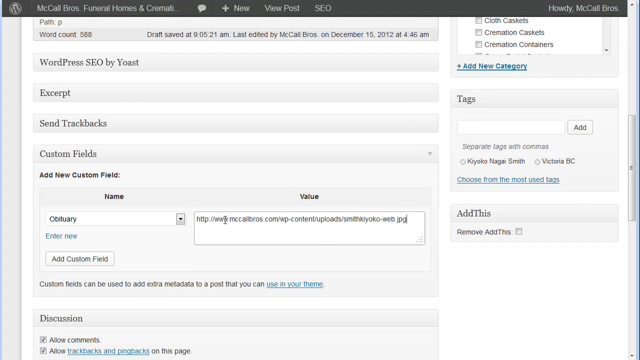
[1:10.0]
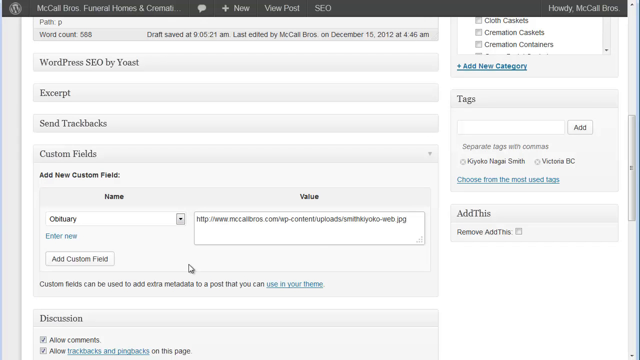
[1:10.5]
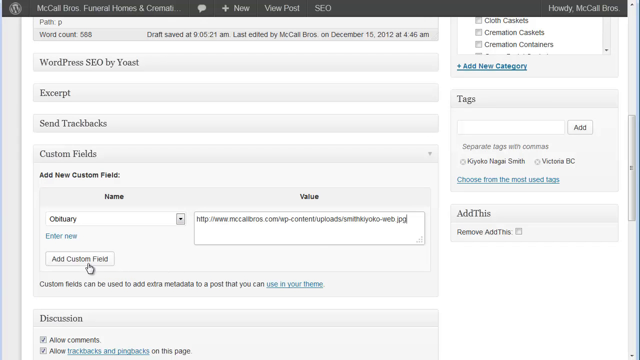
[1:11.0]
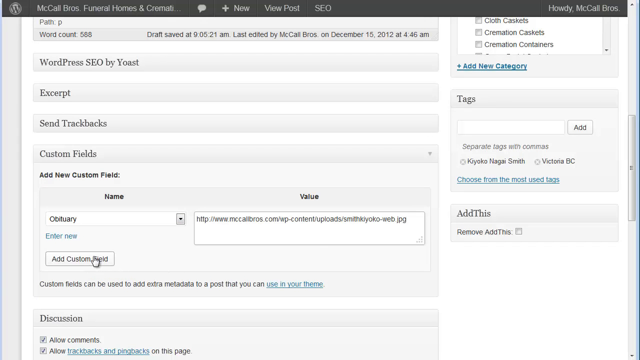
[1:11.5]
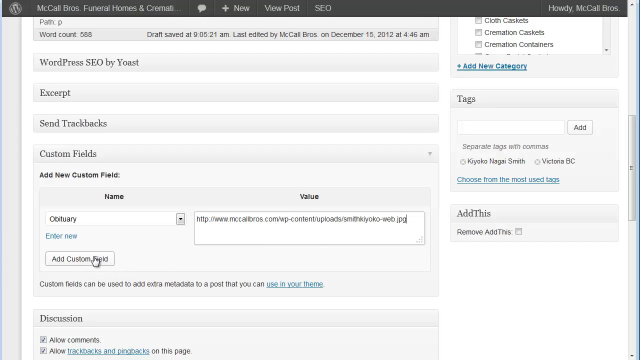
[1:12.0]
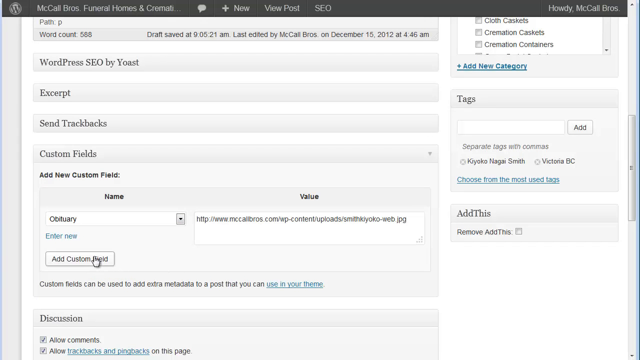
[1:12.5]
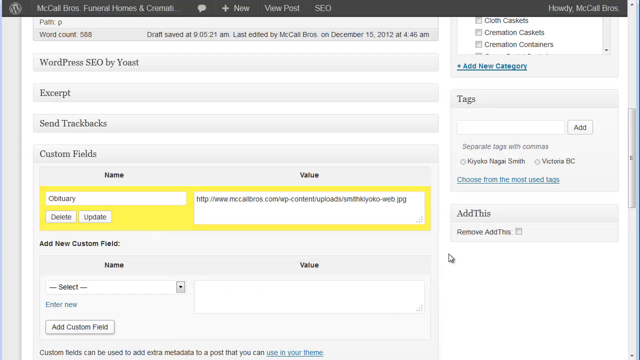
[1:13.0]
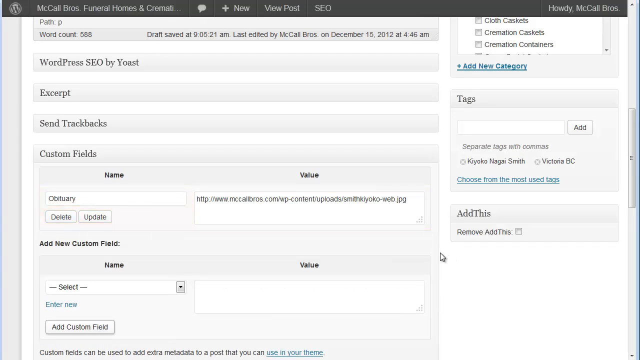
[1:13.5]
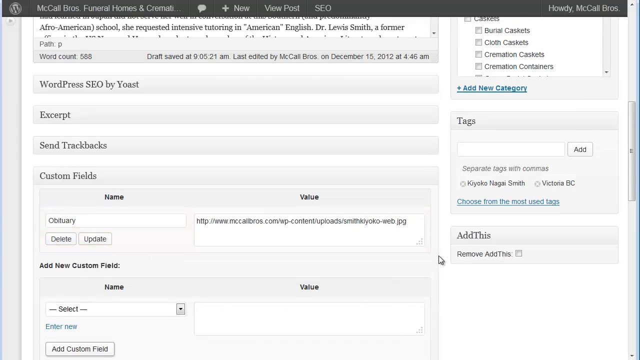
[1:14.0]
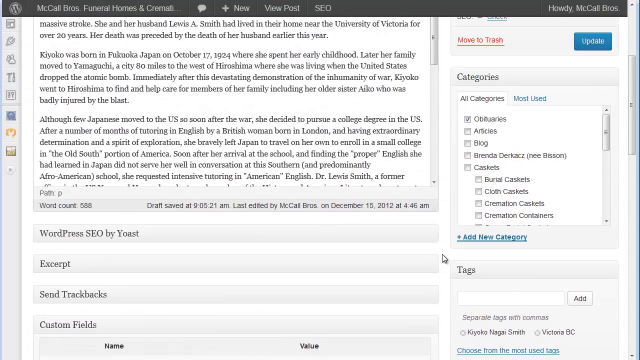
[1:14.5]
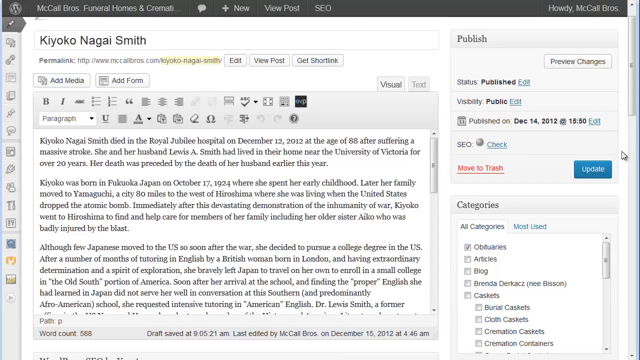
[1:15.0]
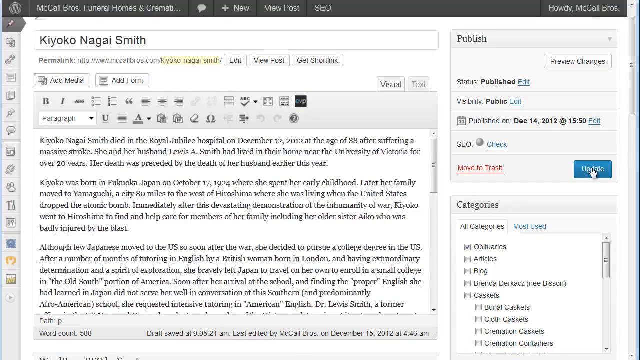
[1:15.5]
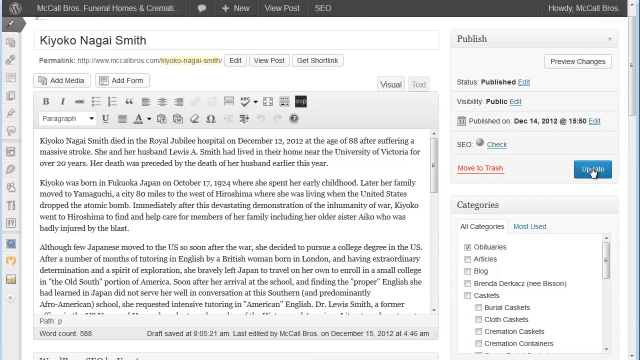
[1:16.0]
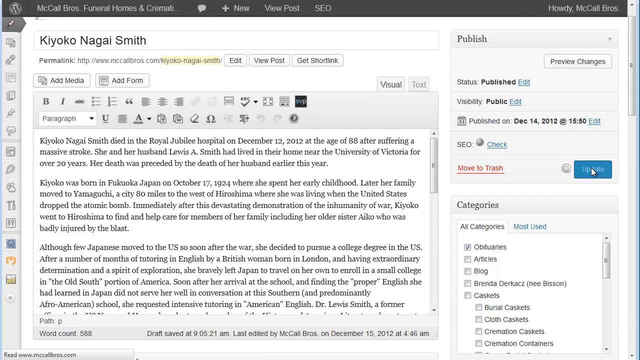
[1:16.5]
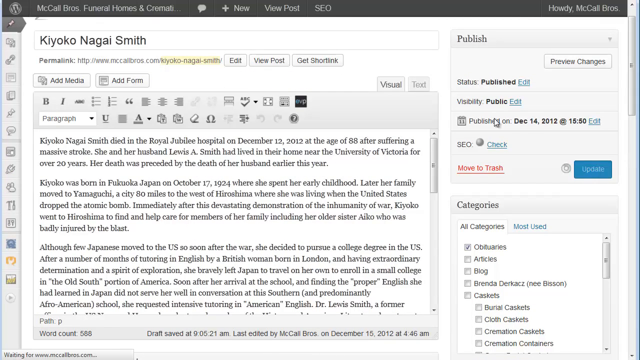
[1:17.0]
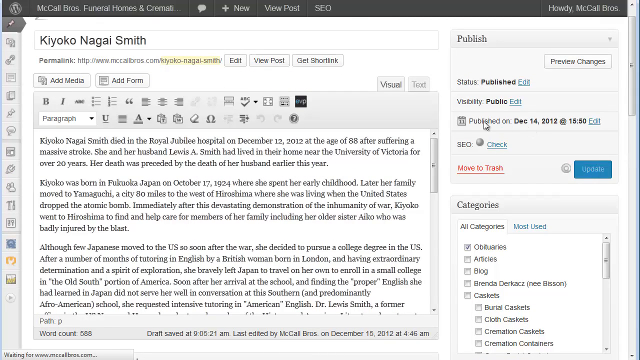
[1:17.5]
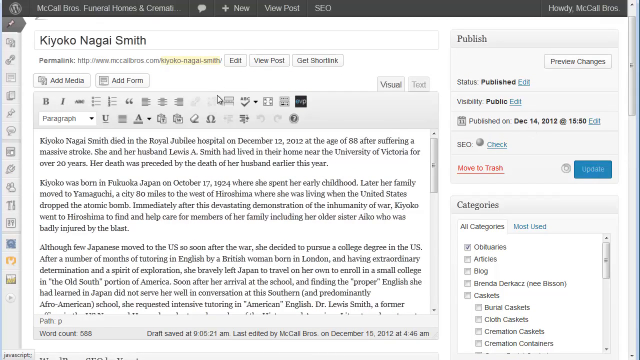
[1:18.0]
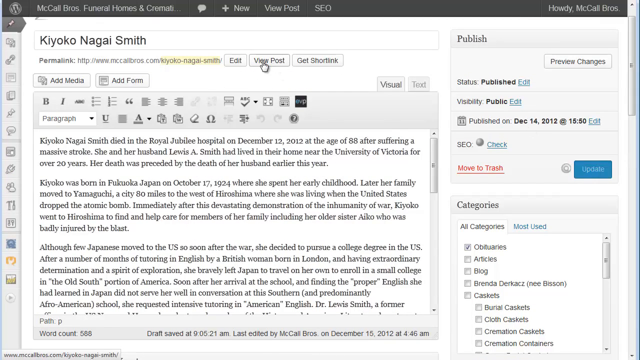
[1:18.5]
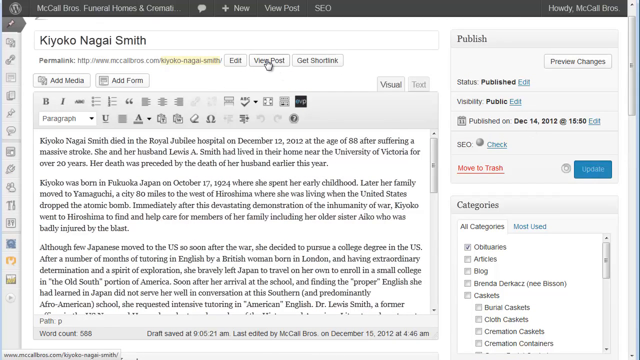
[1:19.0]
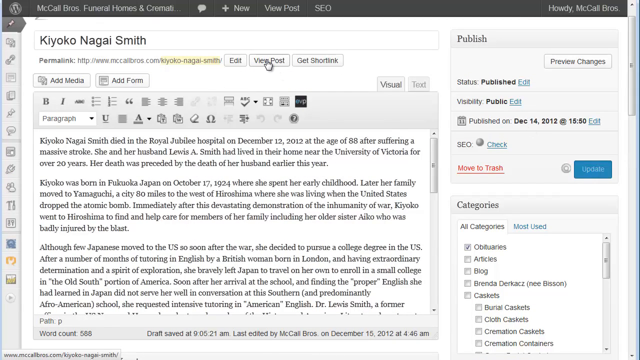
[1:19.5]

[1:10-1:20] The website is used to add, edit and customize images for an obituary through a customize field, where an image is selected, customized and saved.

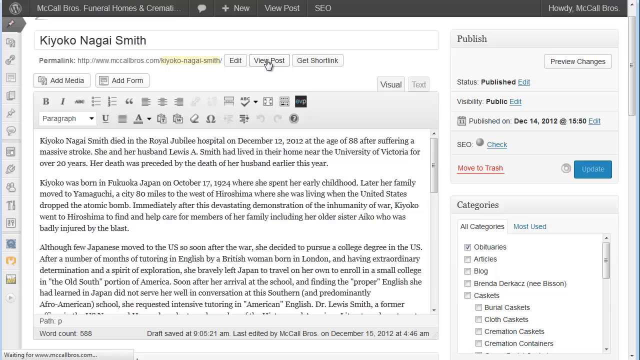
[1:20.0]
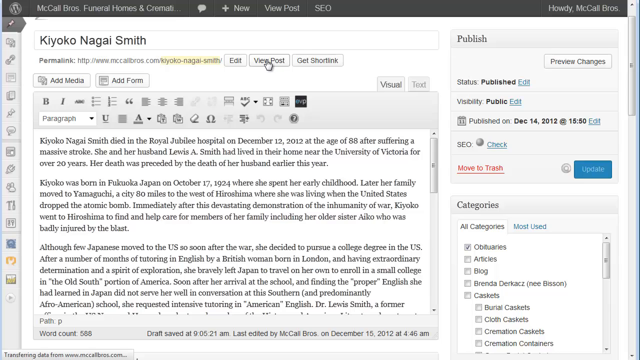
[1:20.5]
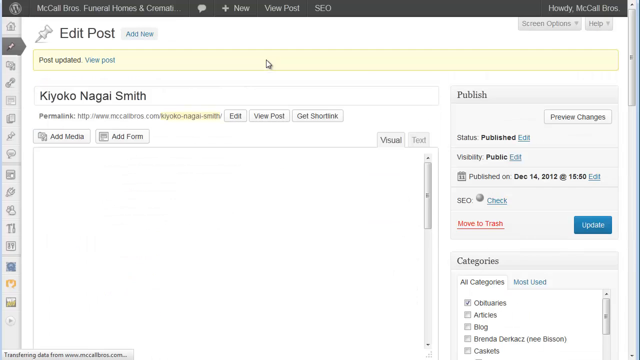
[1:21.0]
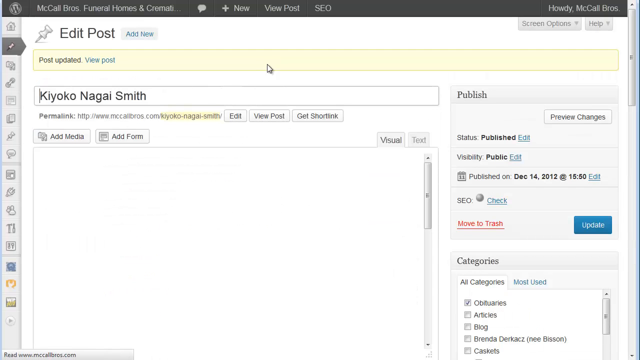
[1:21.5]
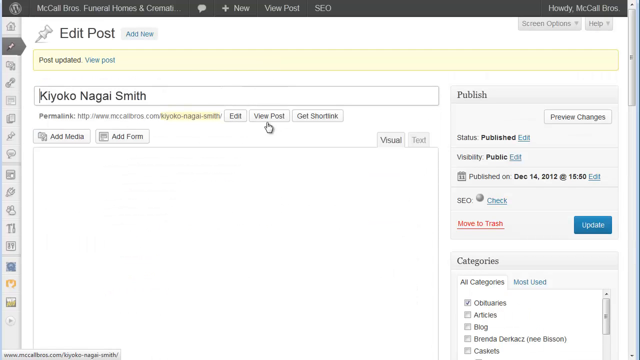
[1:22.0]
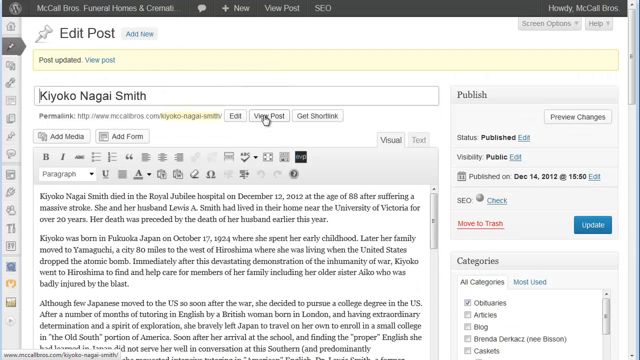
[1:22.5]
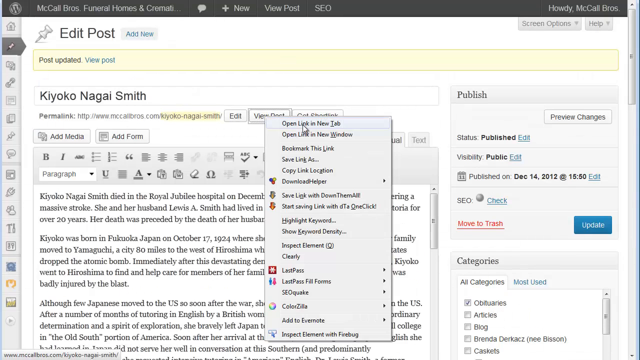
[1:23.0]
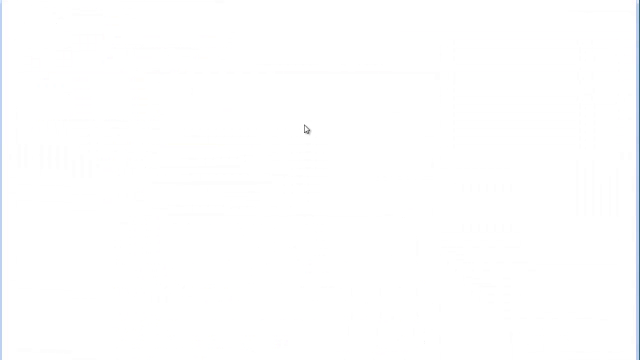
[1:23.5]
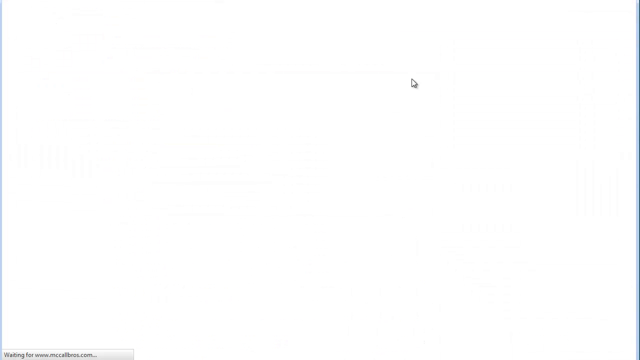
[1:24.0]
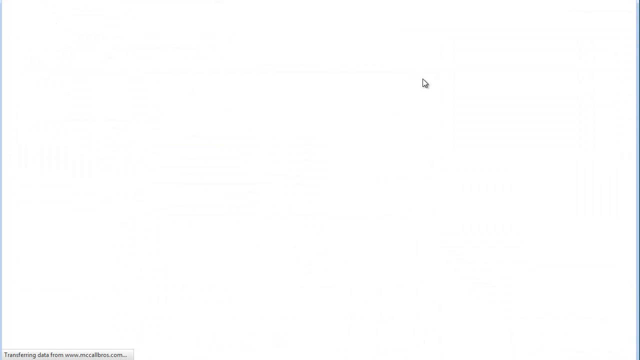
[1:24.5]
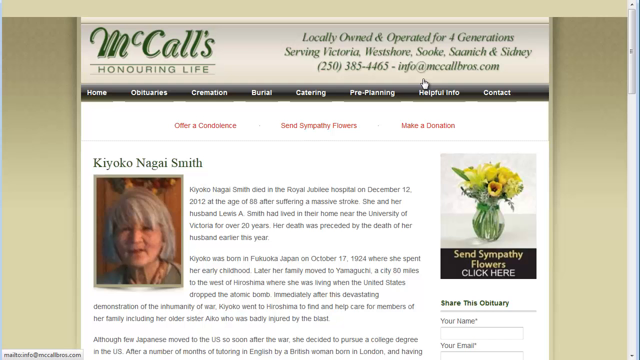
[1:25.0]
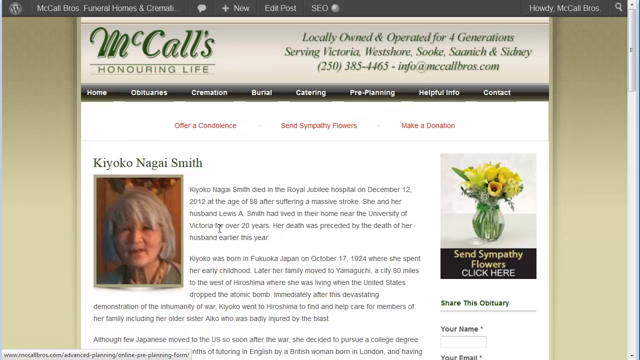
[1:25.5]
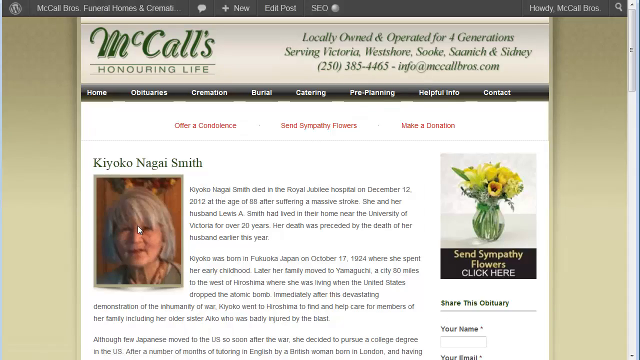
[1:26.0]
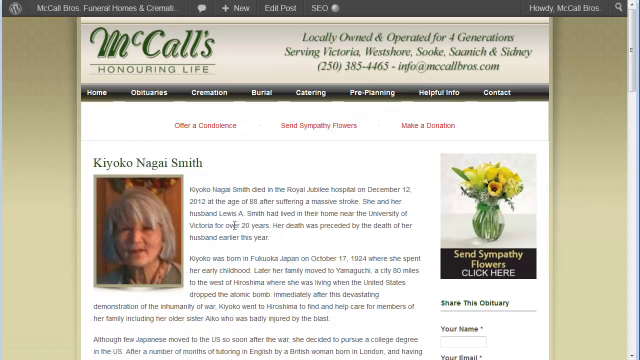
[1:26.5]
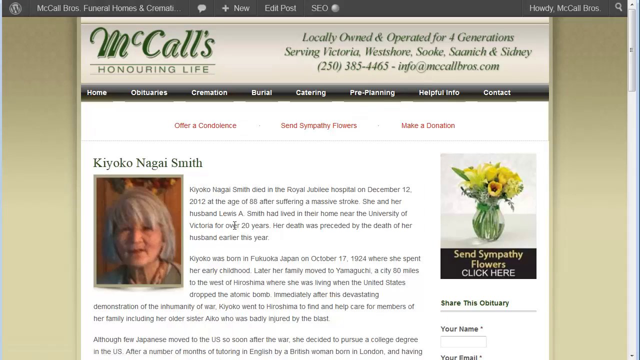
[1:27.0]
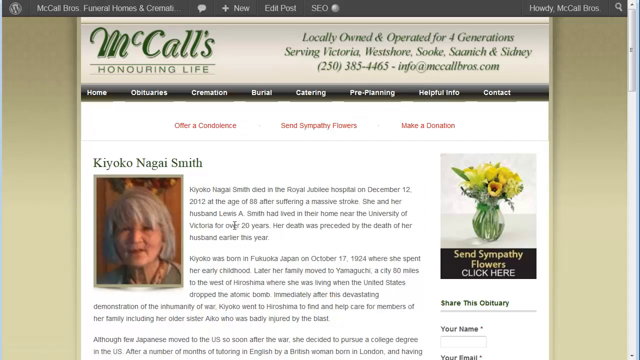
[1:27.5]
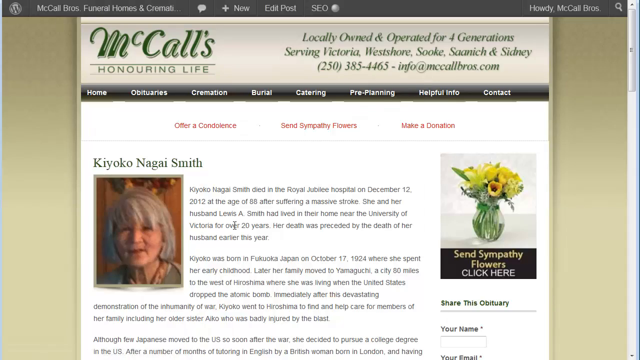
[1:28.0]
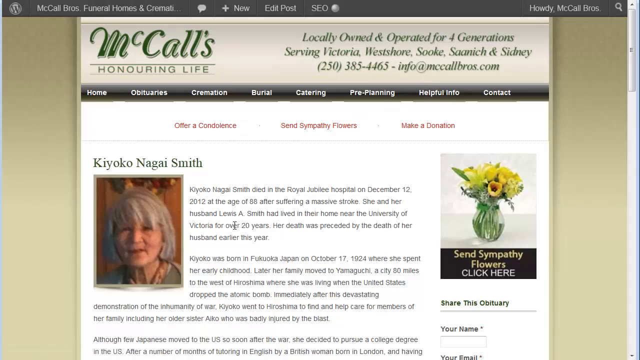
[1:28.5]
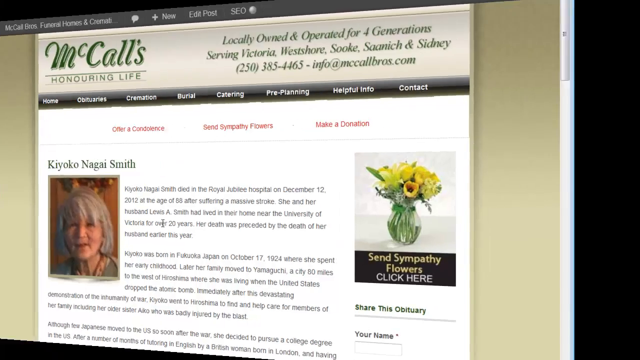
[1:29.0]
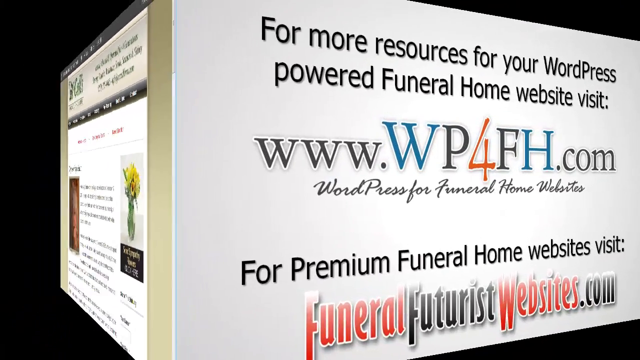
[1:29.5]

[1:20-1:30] An image customized in the customize field fits alongside the obituary's text, side by side, and viewing the post shows all the inserted images.